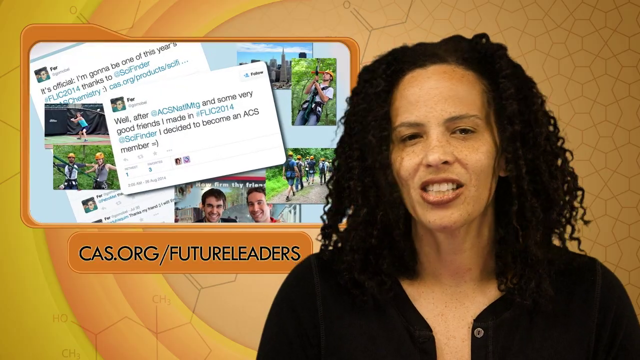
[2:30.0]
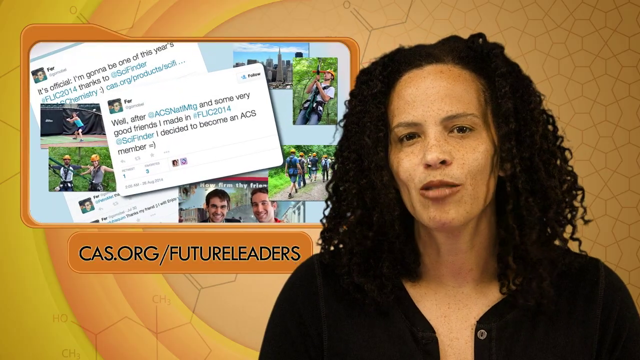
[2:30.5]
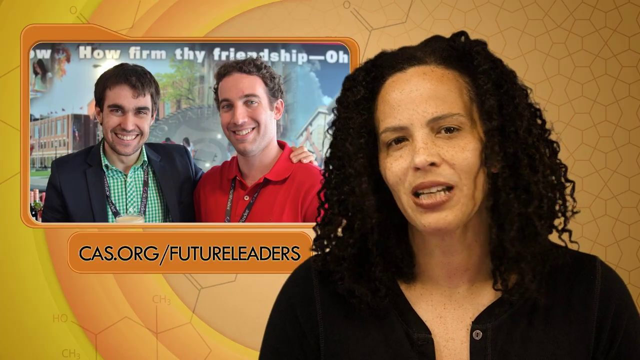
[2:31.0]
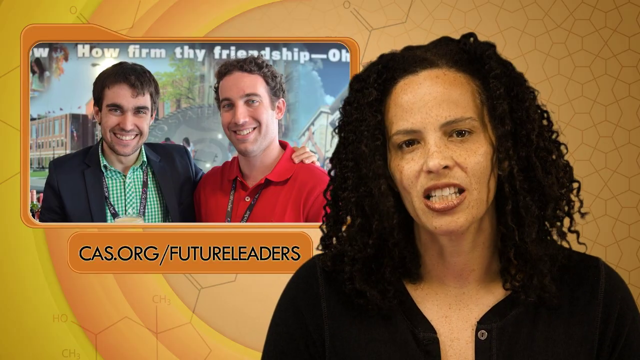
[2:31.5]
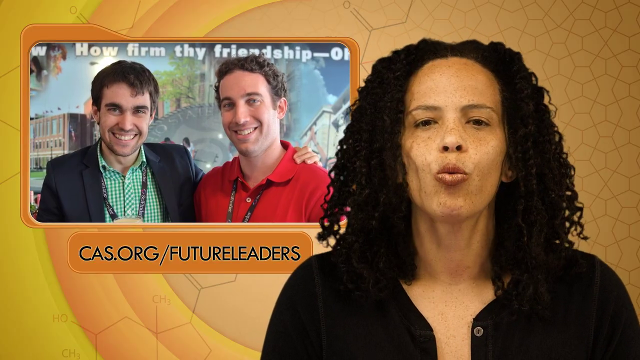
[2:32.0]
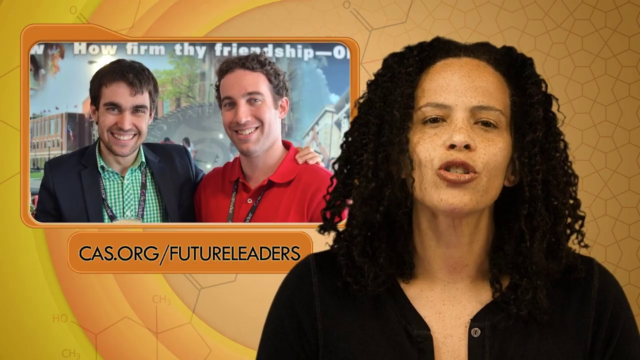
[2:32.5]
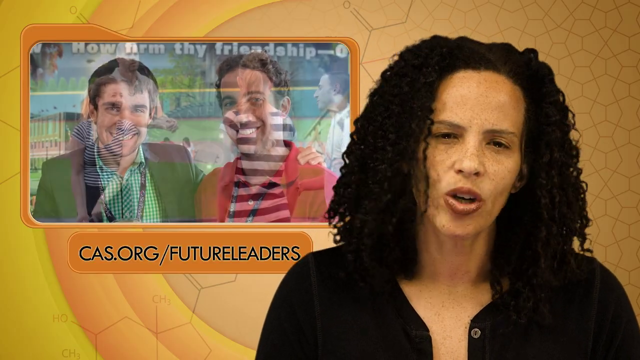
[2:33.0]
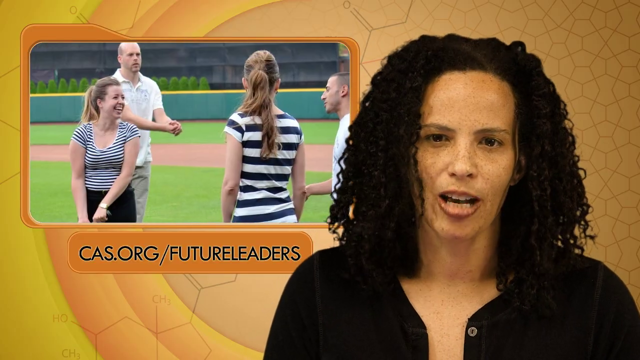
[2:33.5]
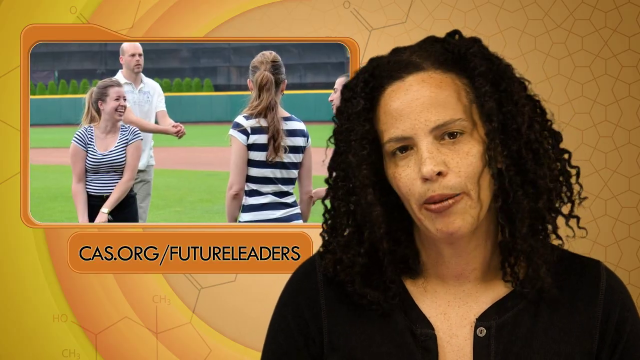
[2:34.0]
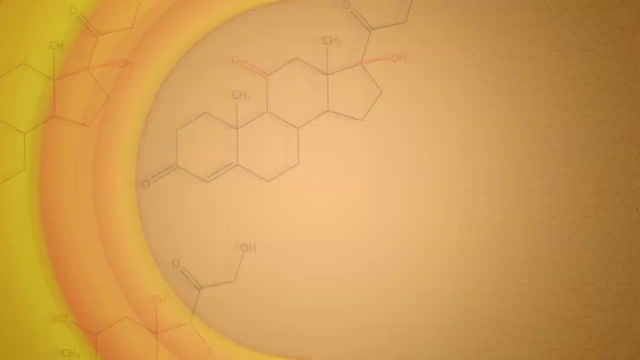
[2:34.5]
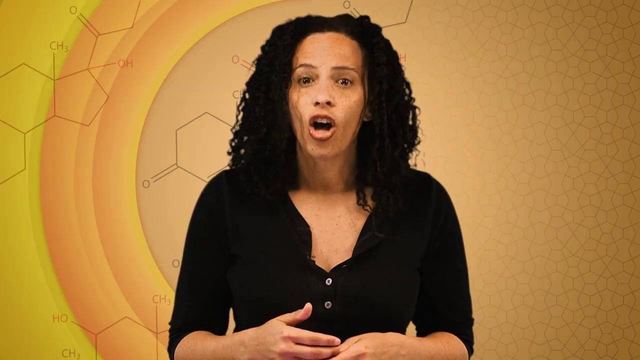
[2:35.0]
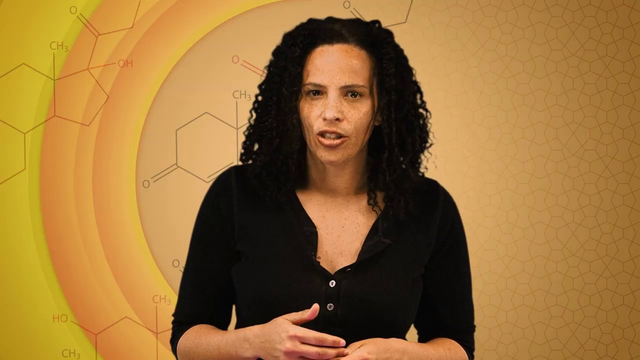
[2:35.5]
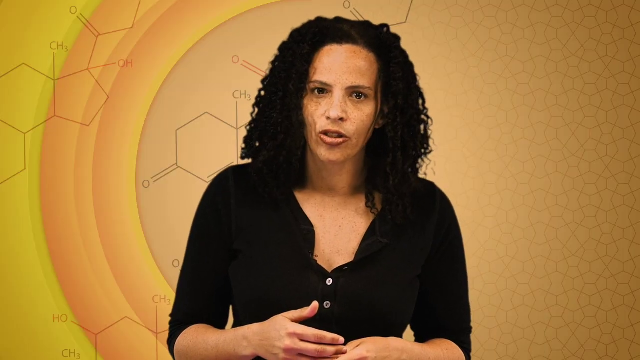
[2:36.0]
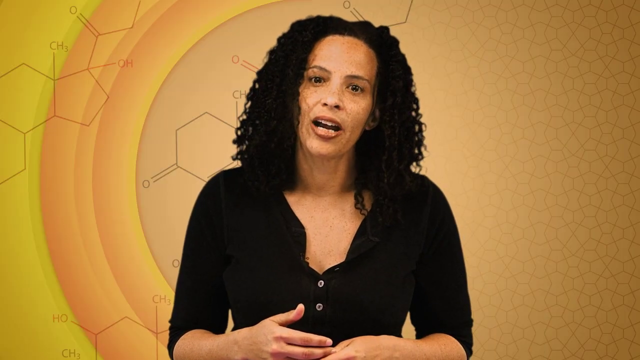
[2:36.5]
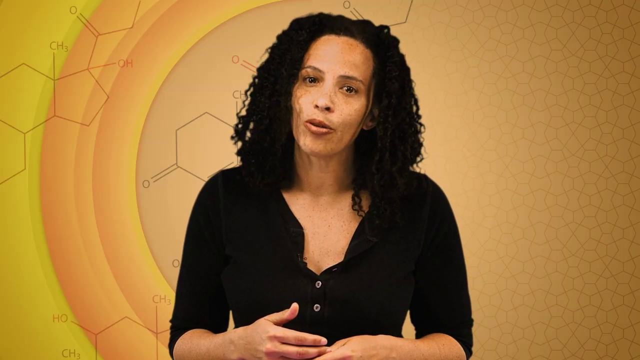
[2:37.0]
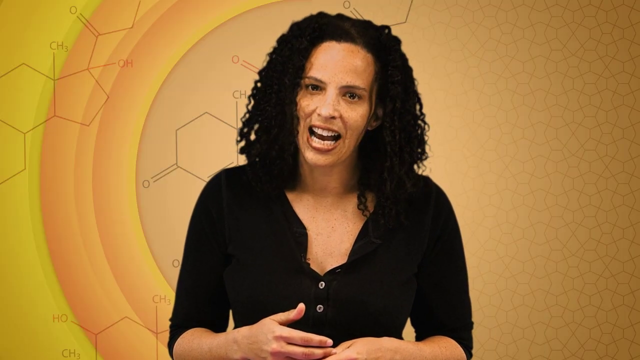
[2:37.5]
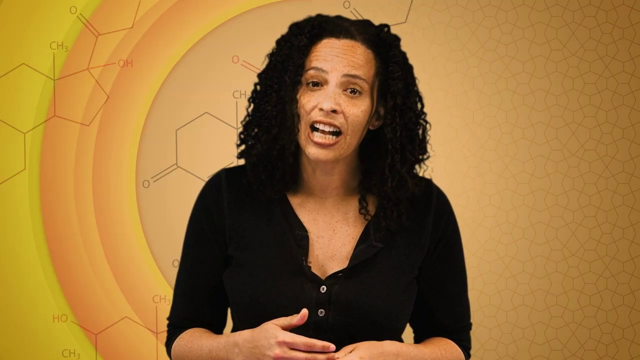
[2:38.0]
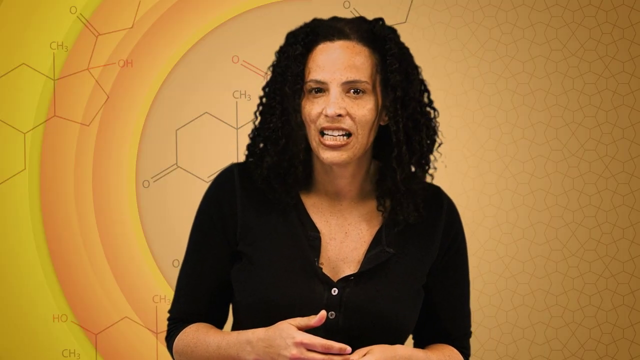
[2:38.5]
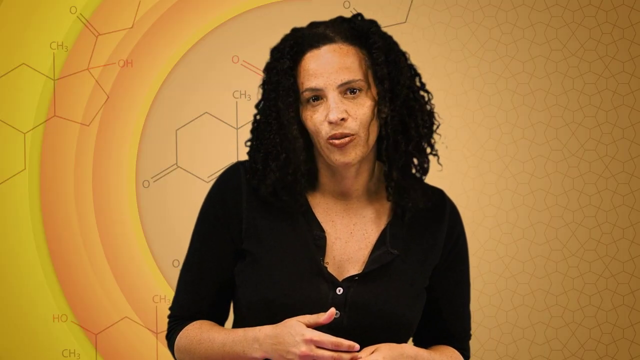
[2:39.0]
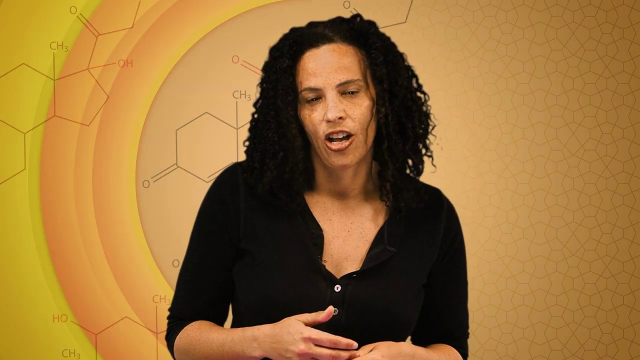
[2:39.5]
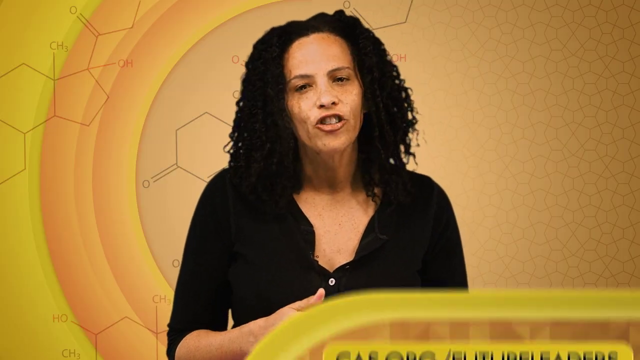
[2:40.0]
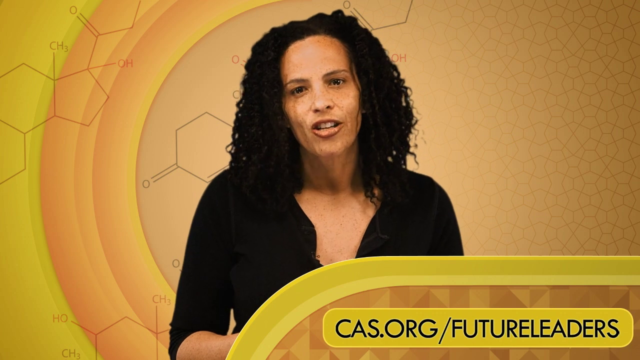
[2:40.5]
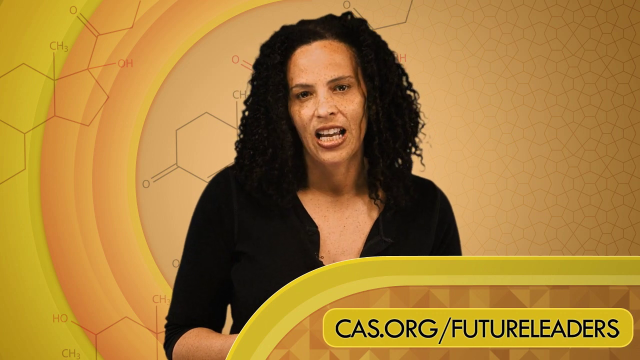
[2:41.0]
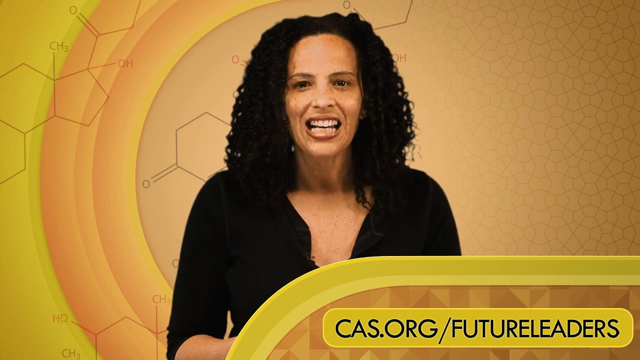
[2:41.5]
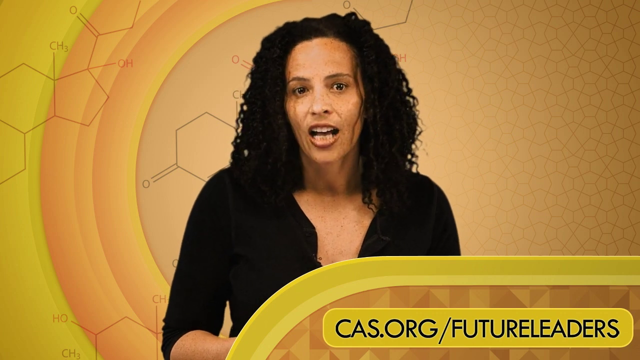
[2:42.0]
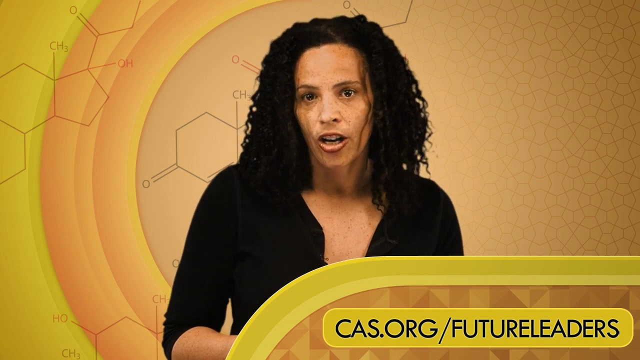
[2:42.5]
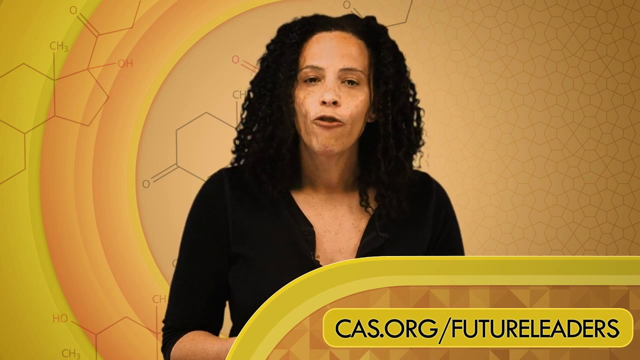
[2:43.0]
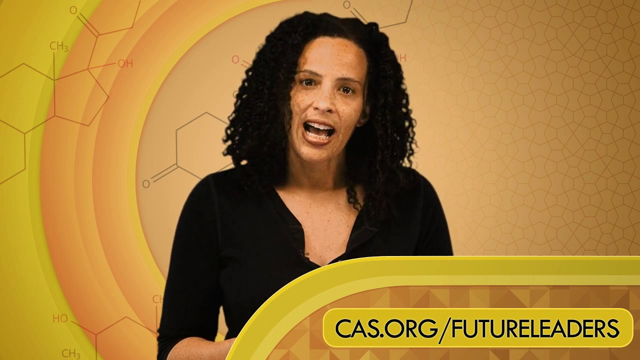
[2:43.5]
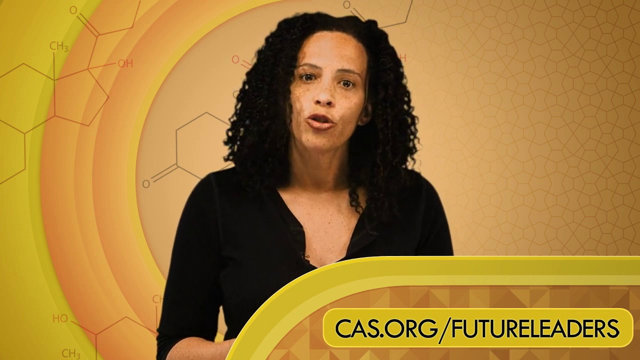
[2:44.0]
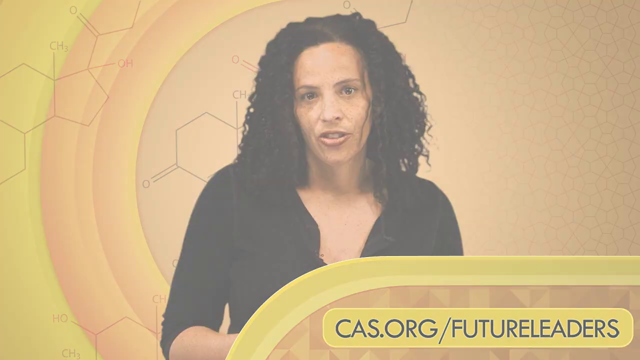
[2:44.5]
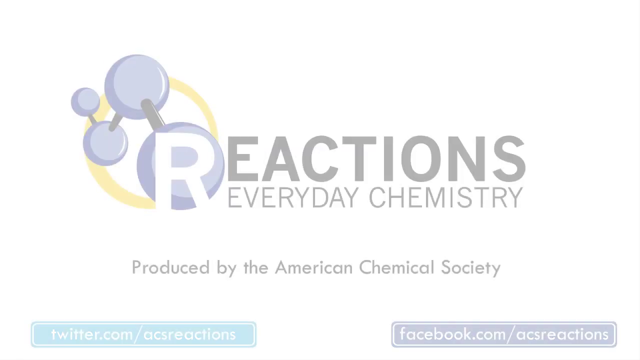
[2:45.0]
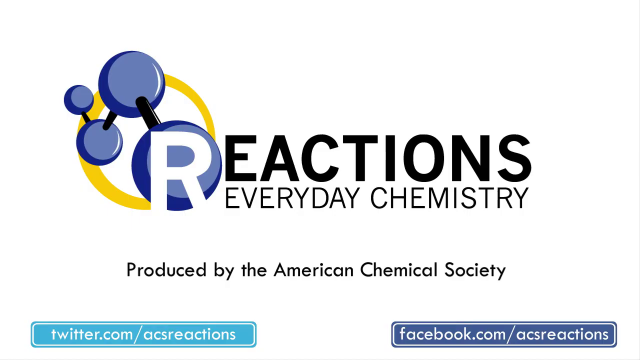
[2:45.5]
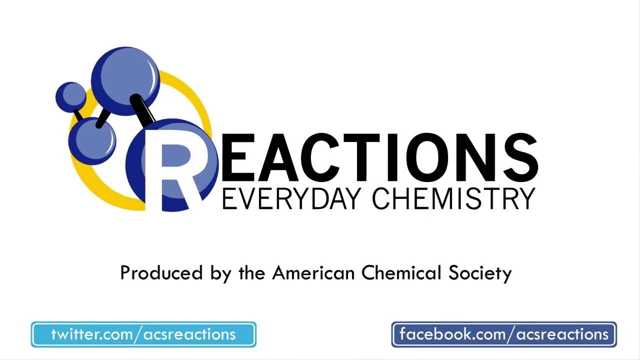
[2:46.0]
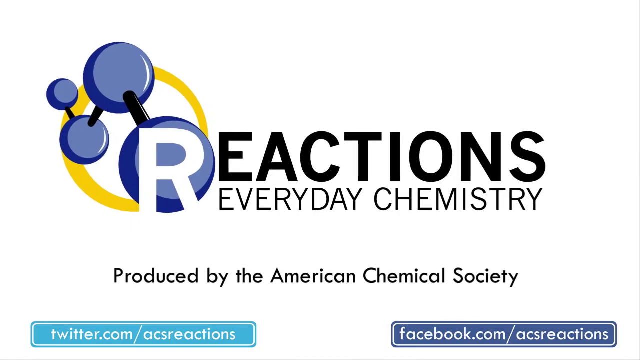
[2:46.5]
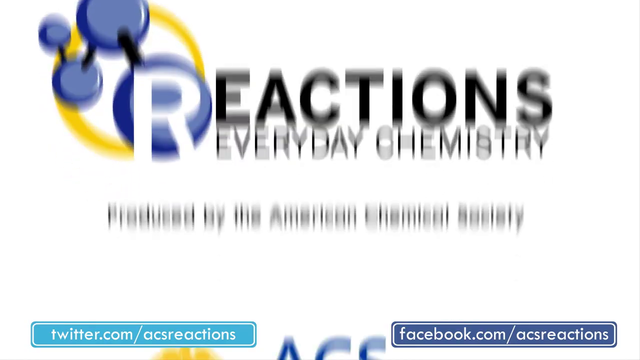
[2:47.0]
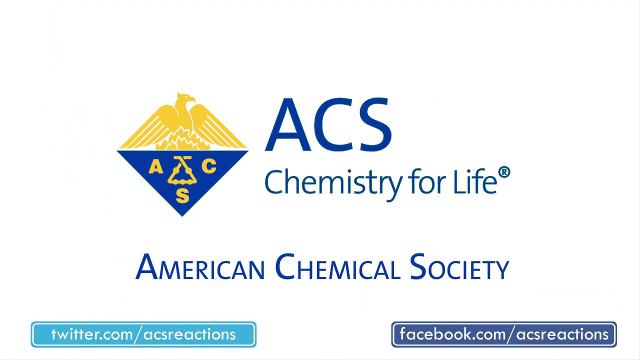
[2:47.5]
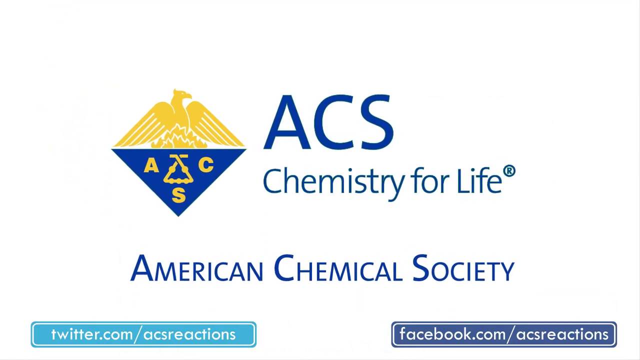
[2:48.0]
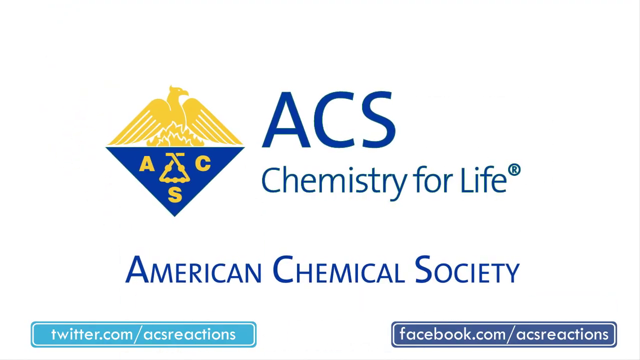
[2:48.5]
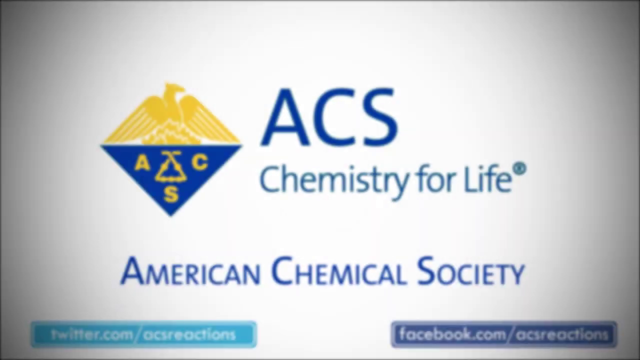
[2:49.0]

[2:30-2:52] The woman remains on the right while the scene on the left changes to two men standing together, and then to a small group of people on a baseball field. The woman then appears in the middle, facing the viewer and speaking, and the website "cas.org/future leaders" appears in the bottom right corner. She looks at the viewer the whole time she talks. The scene changes to a very large logo of "Reactions everyday chemistry," with "Produced by American chemical society." Then the ACS logo appears with "Chemistry for life" and "American chemical society," with a Twitter link in the bottom left and a Facebook link in the bottom right.